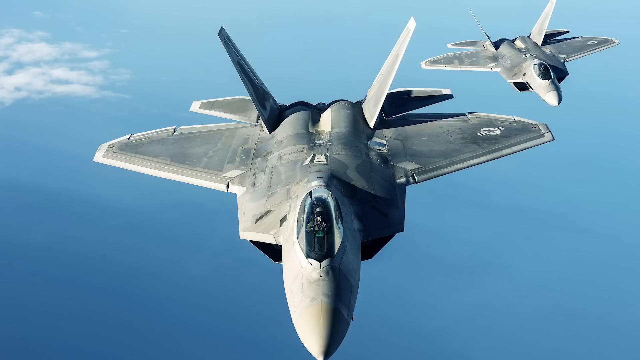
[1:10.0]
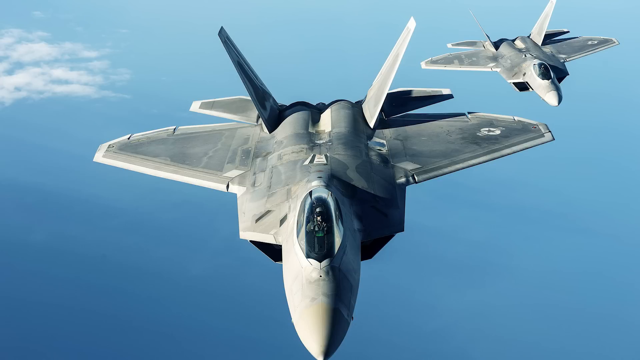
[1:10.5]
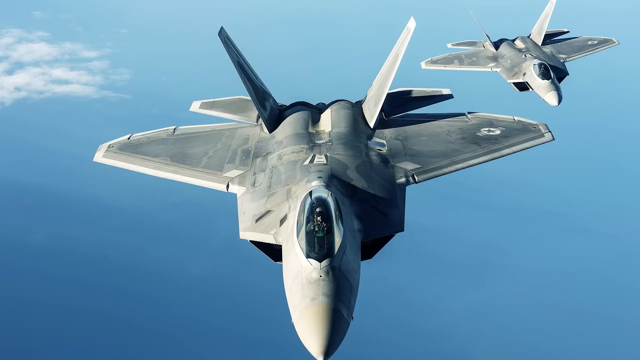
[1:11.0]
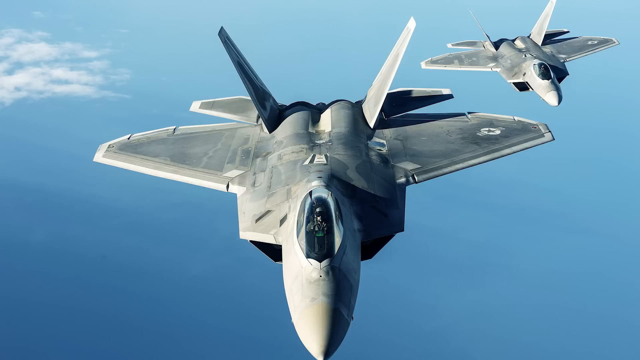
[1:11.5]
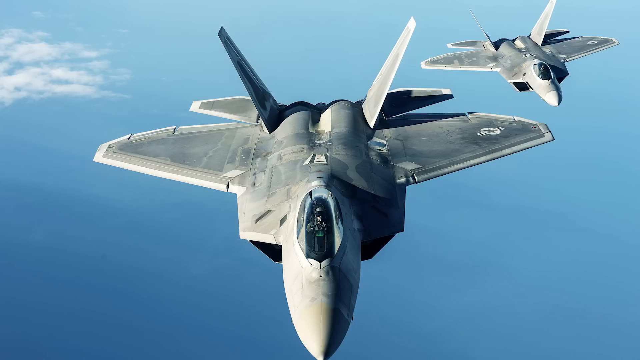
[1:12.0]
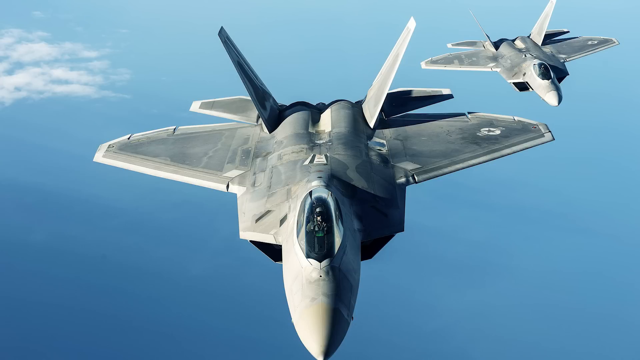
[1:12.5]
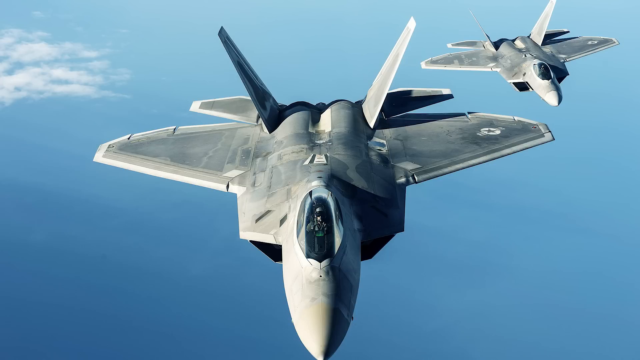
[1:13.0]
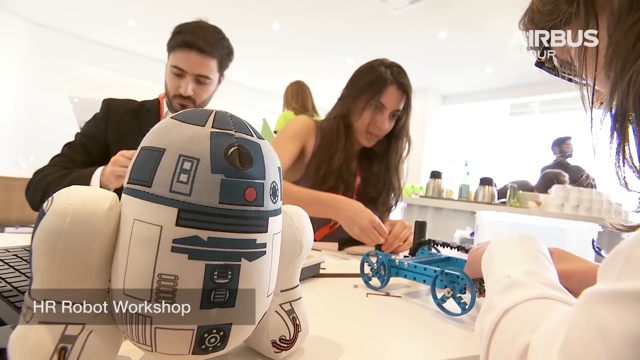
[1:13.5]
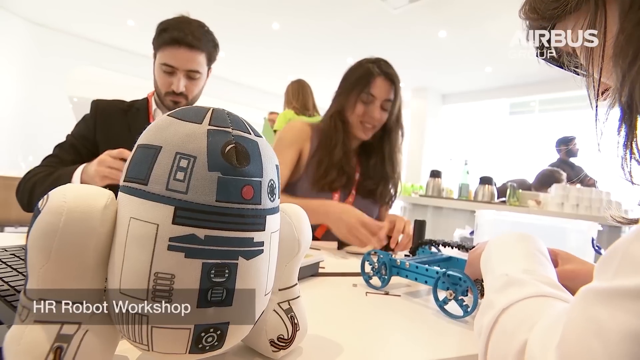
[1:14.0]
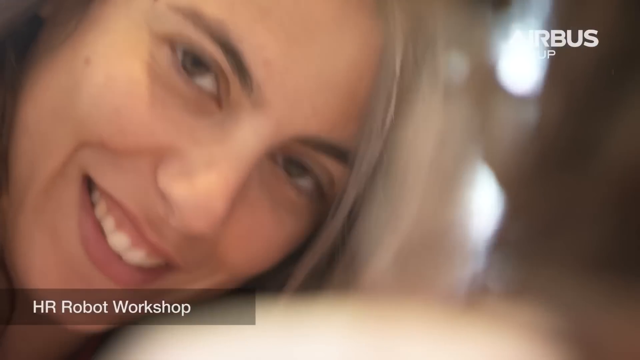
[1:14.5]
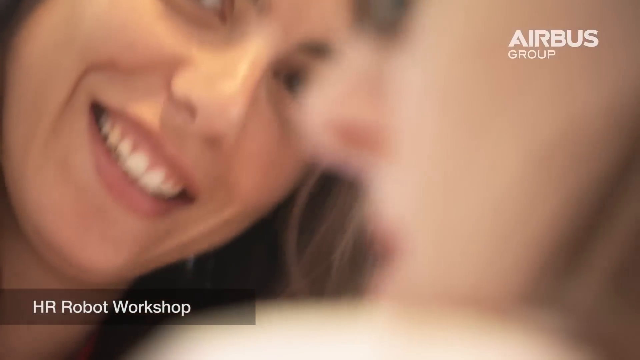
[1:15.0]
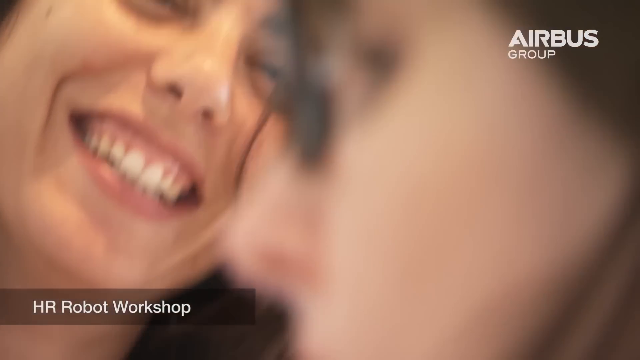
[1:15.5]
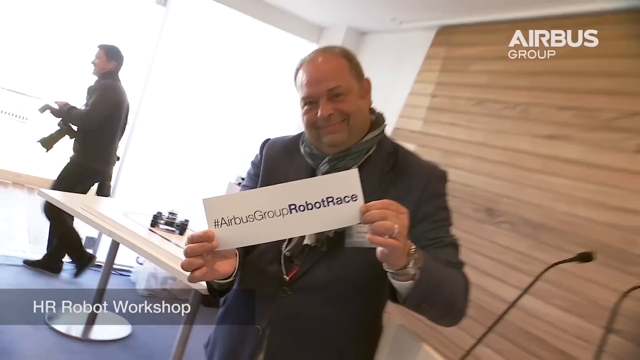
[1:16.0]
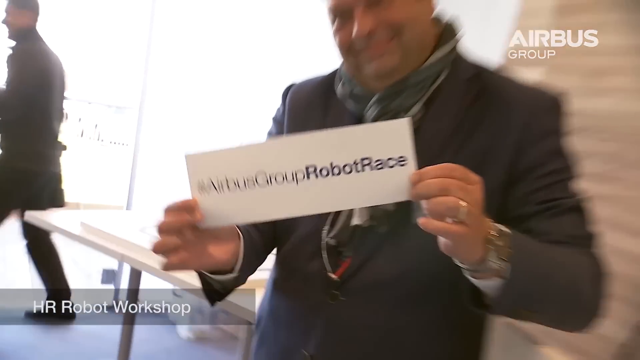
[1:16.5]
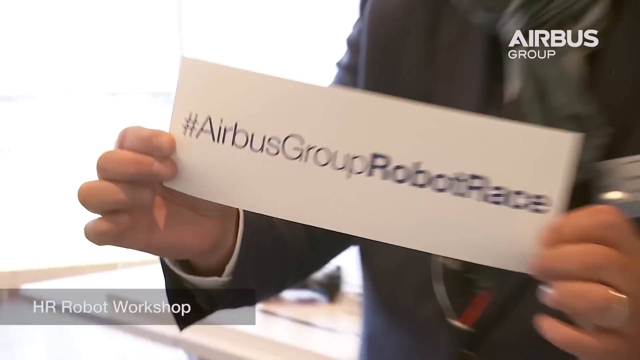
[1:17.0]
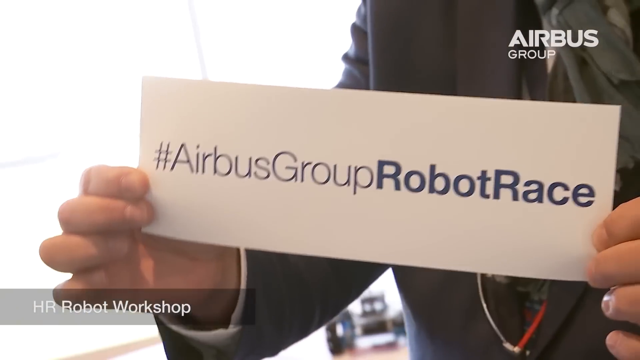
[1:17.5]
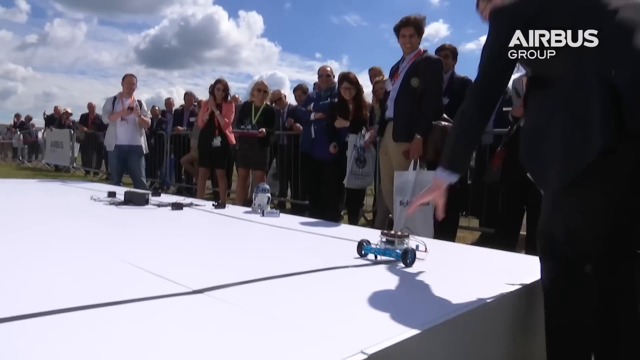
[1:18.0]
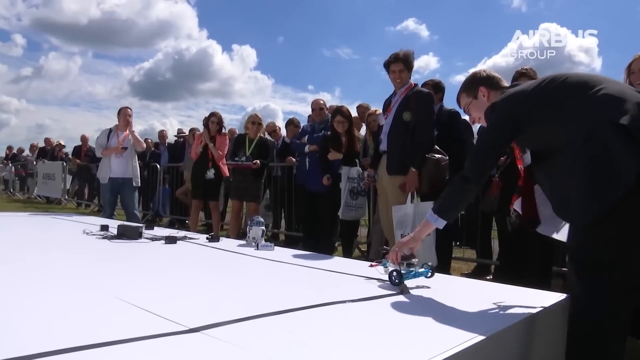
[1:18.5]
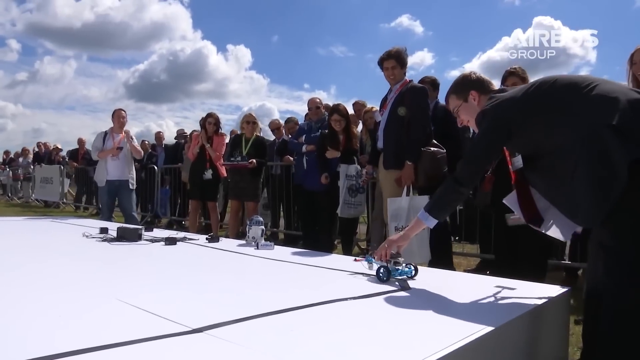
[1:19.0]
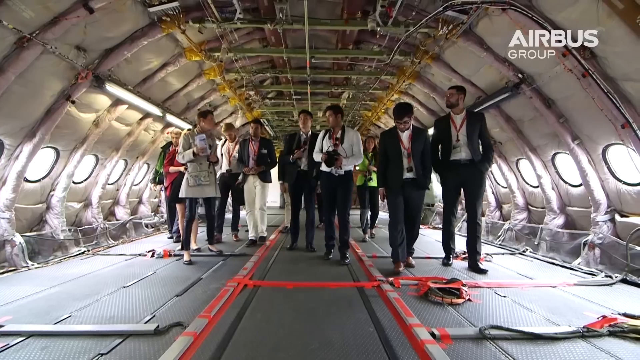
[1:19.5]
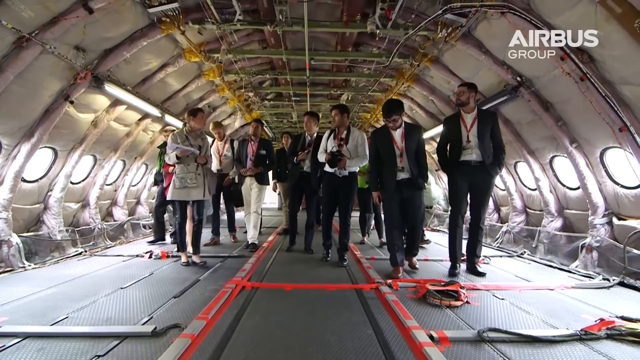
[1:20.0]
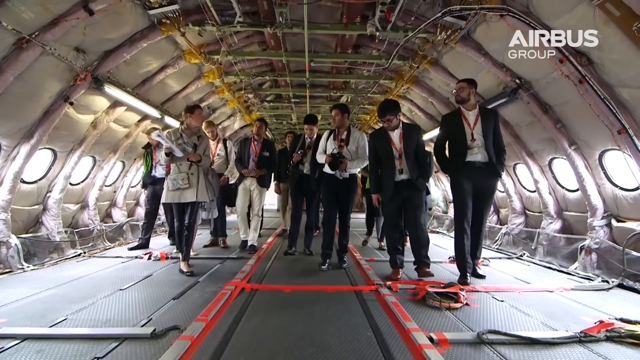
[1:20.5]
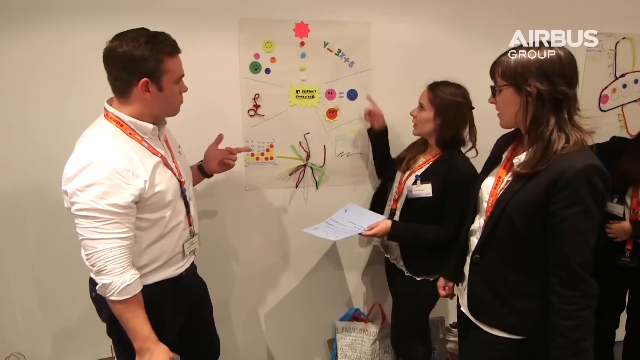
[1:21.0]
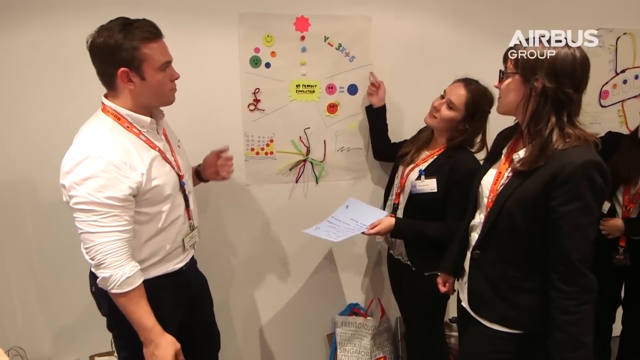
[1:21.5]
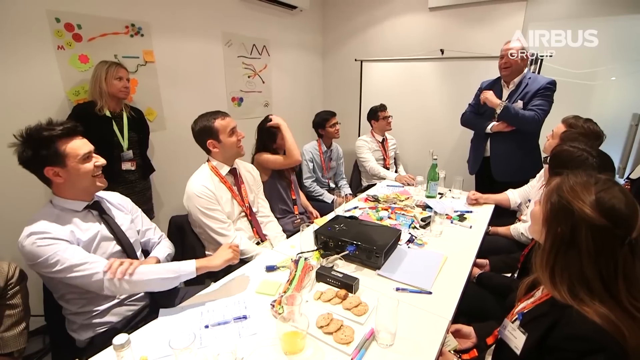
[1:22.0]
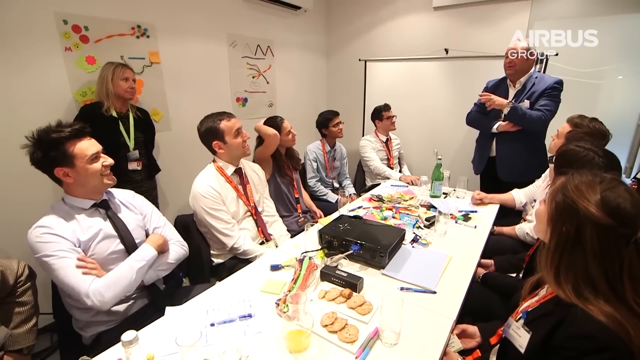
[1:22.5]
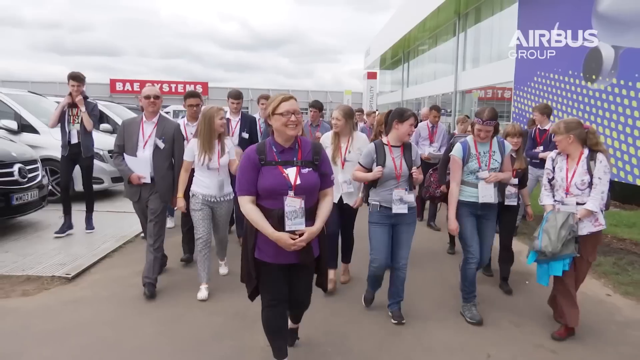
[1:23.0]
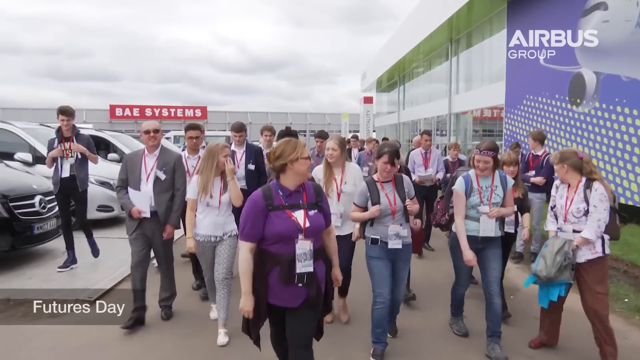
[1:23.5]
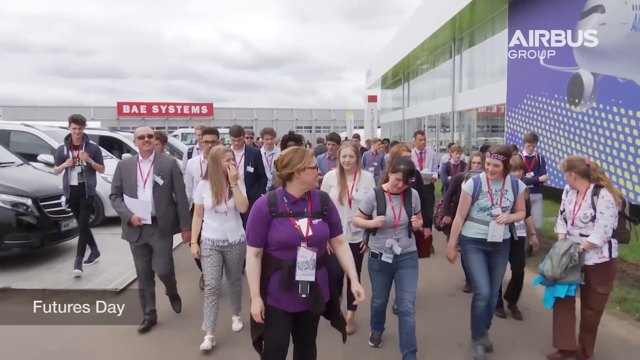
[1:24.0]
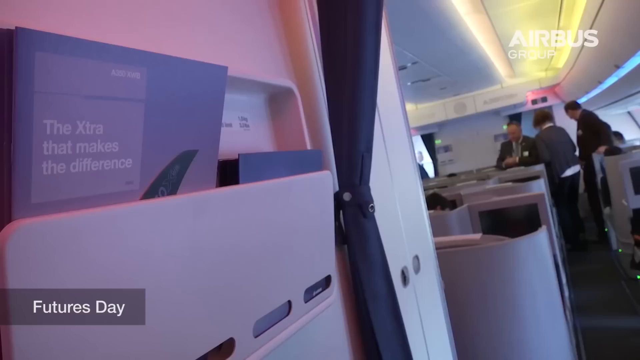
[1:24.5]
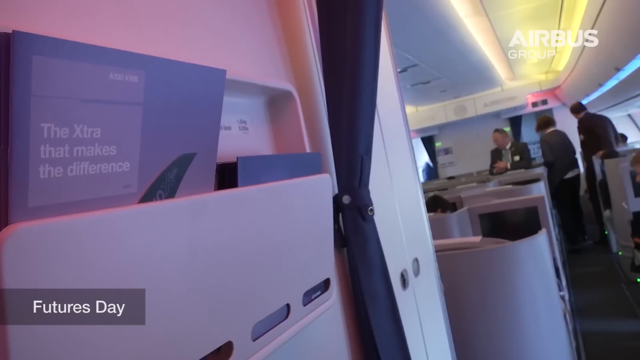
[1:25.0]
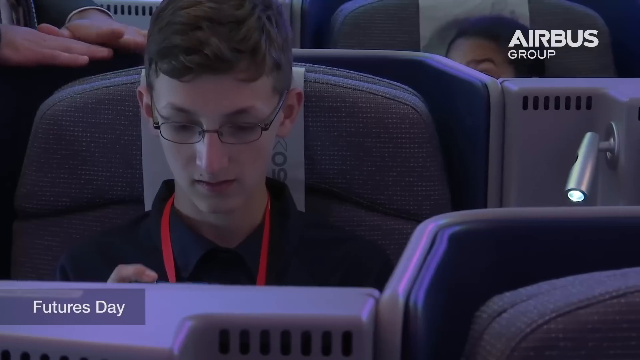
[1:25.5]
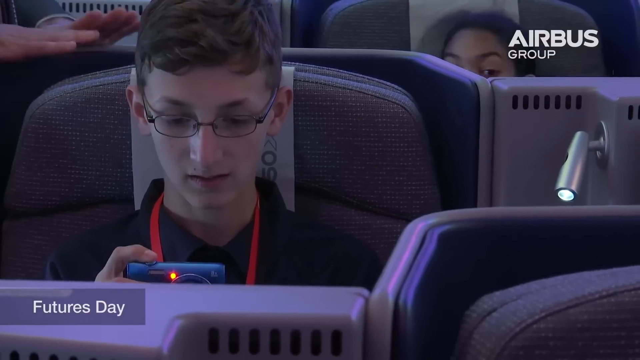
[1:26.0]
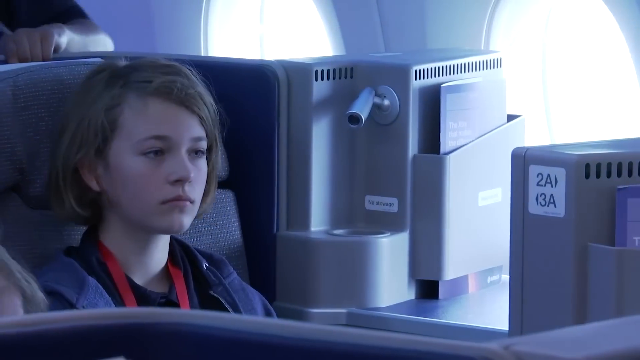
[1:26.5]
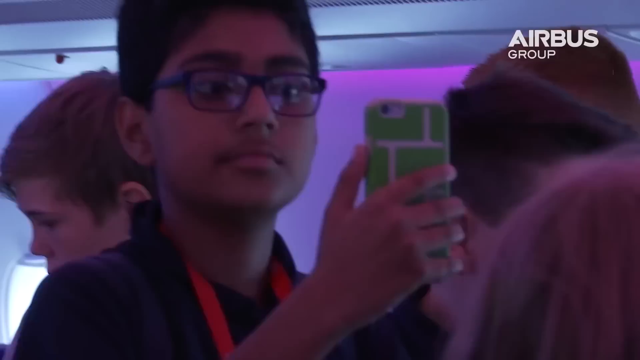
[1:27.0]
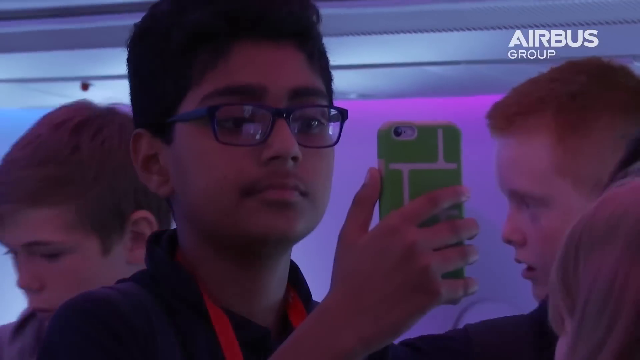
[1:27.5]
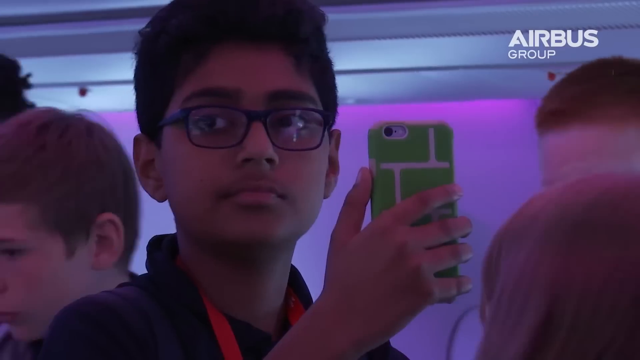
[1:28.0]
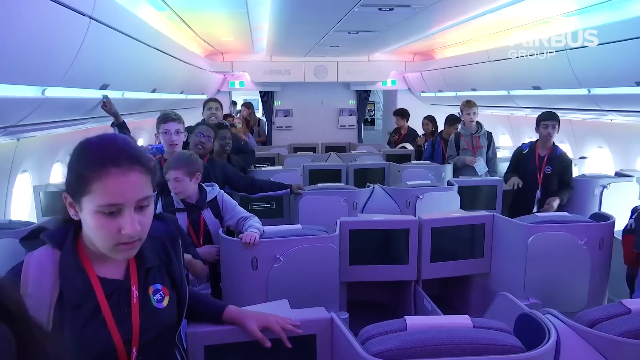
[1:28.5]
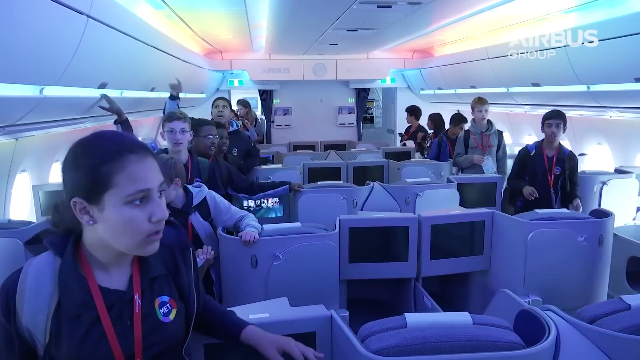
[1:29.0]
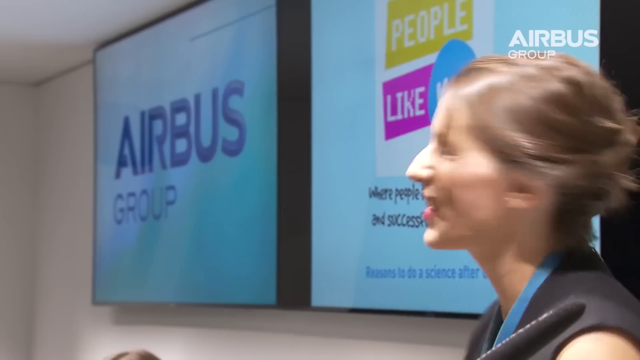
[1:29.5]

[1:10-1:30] Two fighter jets are shown, followed by a man and a woman working on what looks like a small blue robot, with other people in the background. A woman's face appears in close-up, smiling with all her teeth showing. A man holds a sign that says "#Airbus robot race". Next, what looks like a robot race takes place, with many people watching the robots. A group of people is inside an empty plane; they appear to be talking, some have cameras and some are inspecting the floor. Two ladies in black and white suits talk to a man wearing a white long-sleeved shirt with rolled-up sleeves. What looks like a group meeting takes place in a conference room, and the people seem happy. Employees walk outside their building. A passenger inside a plane looks at something, probably a camera. A young teenager stares at the plane's screen. A young boy wearing dark-rimmed glasses holds a green phone. A group of students is shown inside a plane, and then a lady talks behind the Airbus sign.